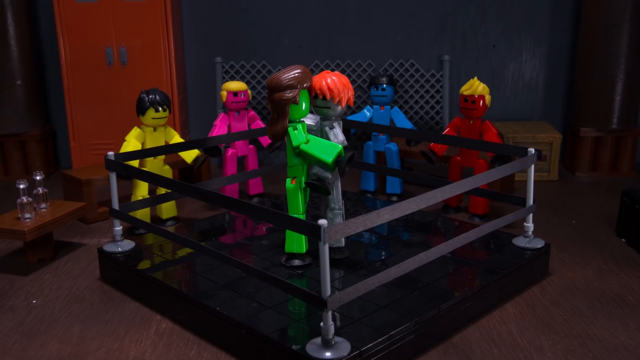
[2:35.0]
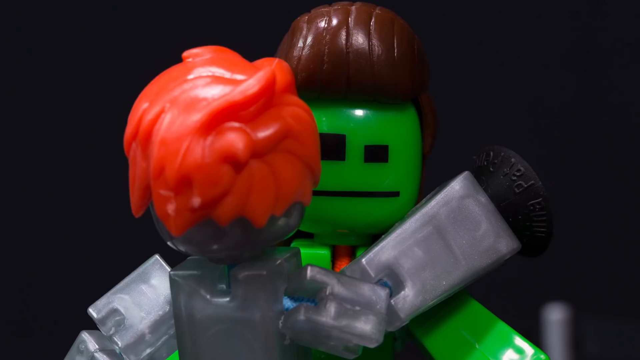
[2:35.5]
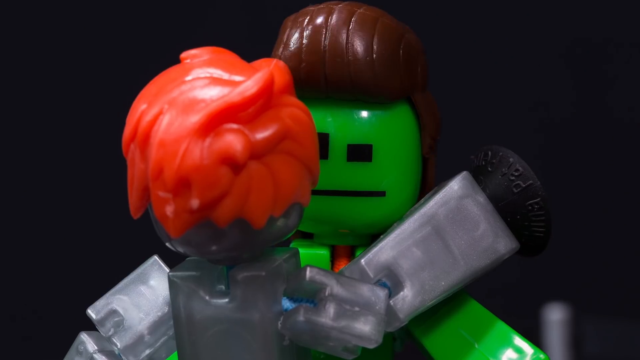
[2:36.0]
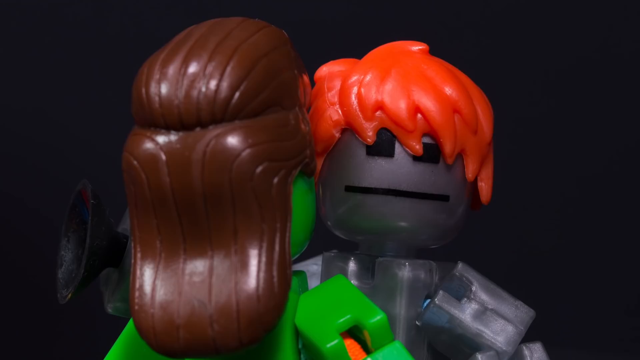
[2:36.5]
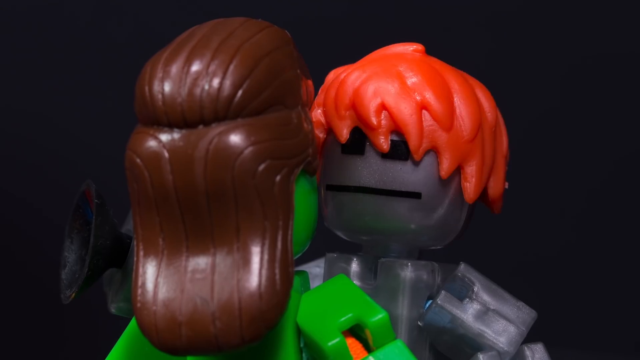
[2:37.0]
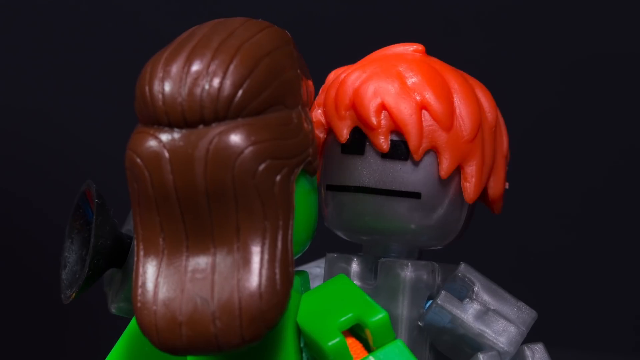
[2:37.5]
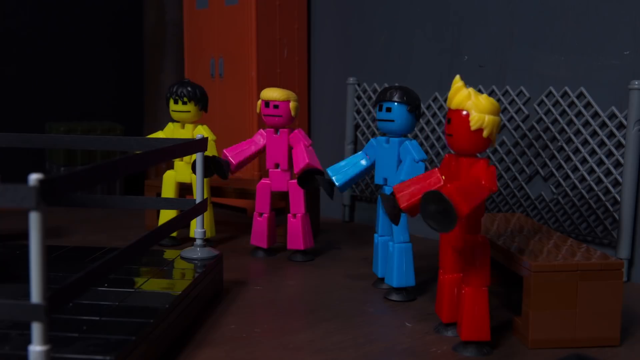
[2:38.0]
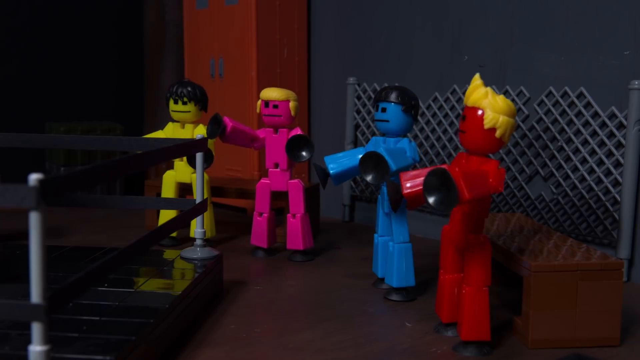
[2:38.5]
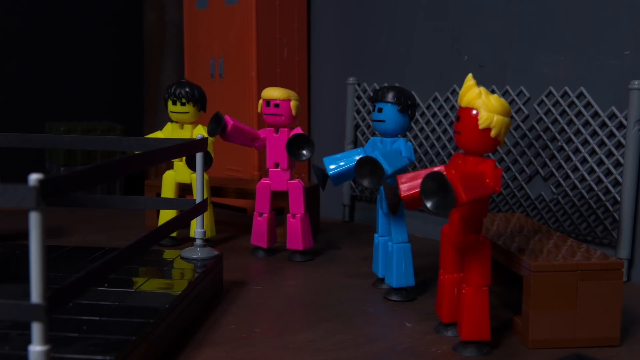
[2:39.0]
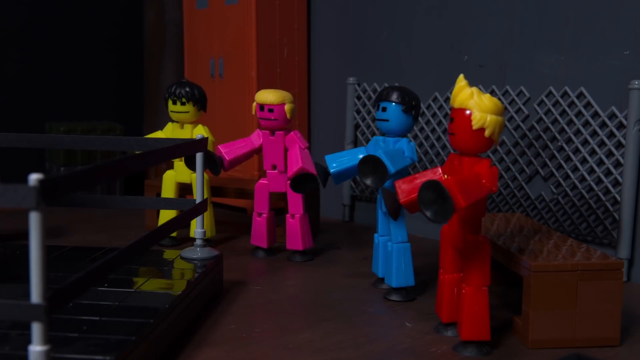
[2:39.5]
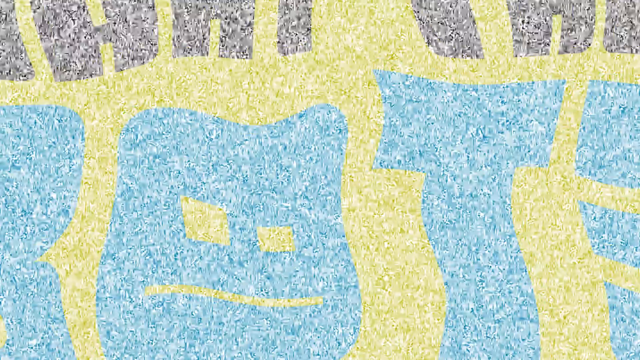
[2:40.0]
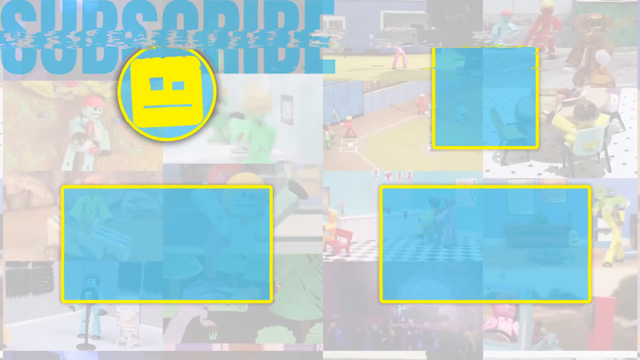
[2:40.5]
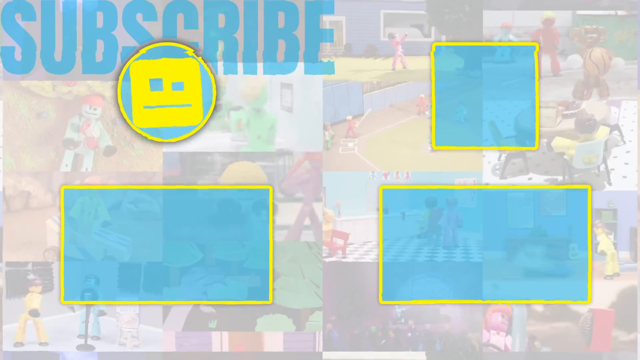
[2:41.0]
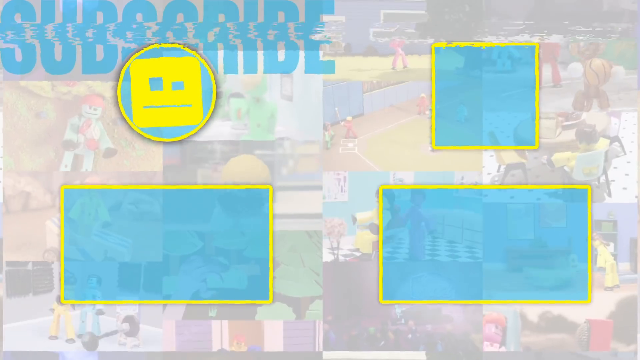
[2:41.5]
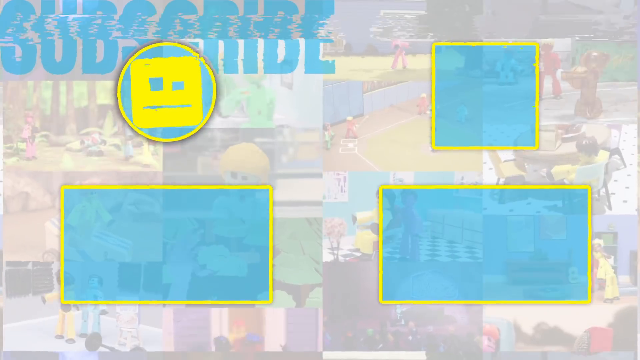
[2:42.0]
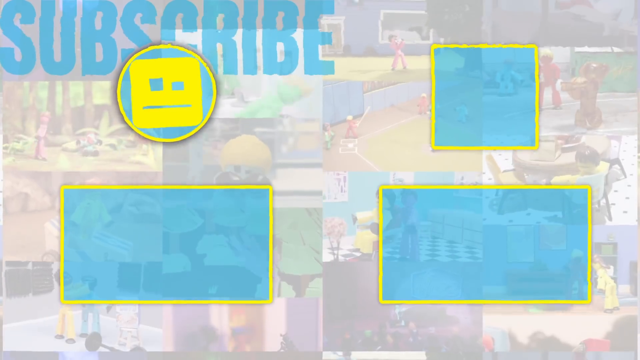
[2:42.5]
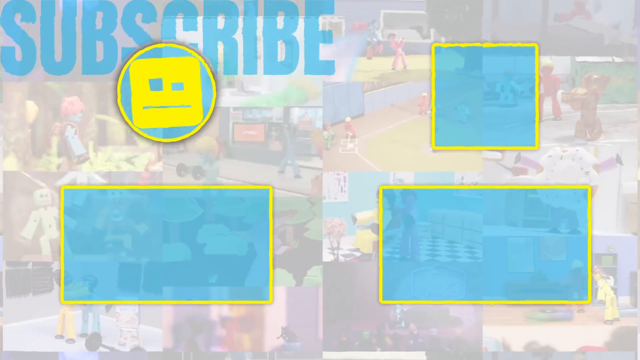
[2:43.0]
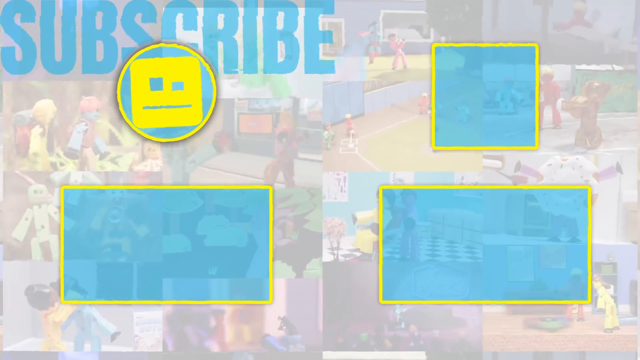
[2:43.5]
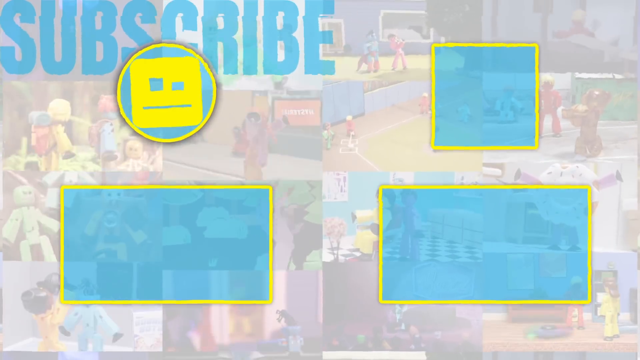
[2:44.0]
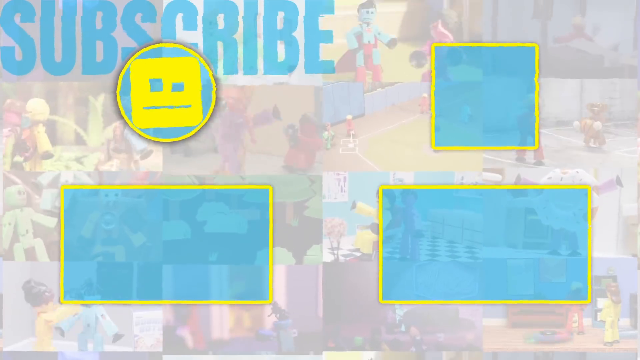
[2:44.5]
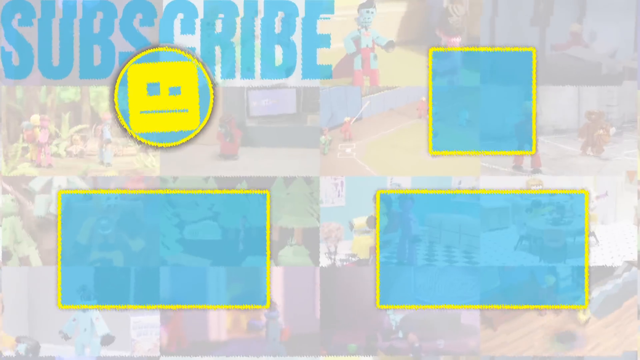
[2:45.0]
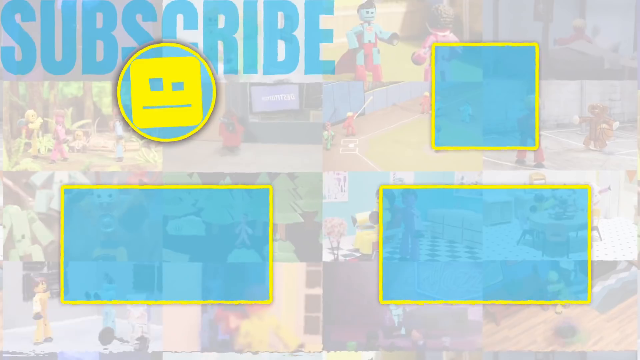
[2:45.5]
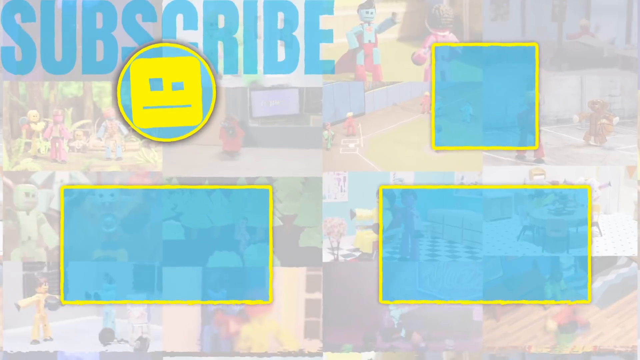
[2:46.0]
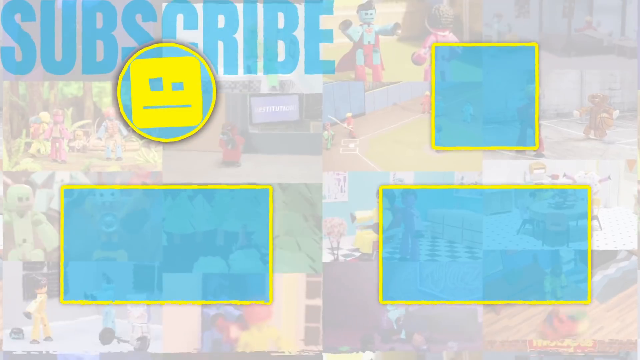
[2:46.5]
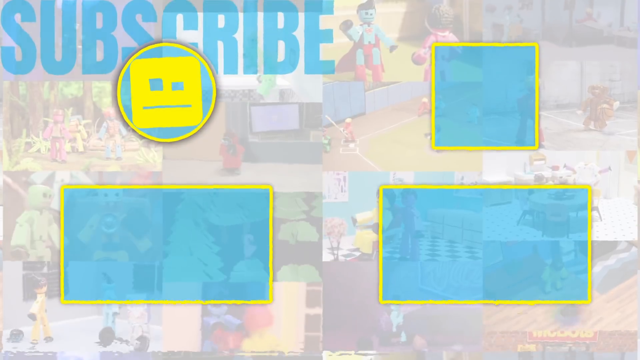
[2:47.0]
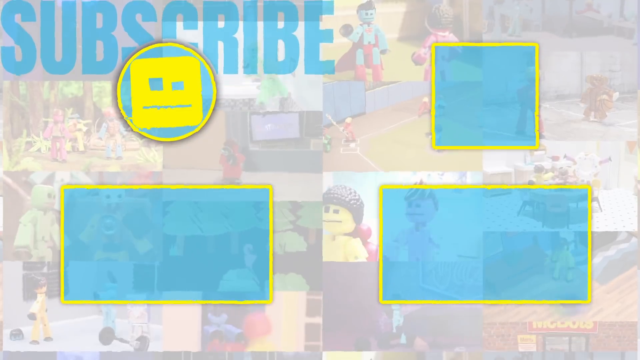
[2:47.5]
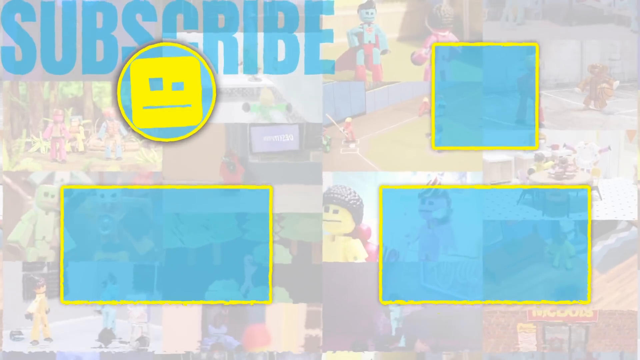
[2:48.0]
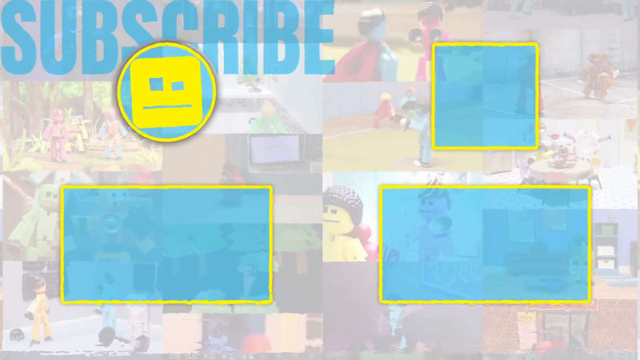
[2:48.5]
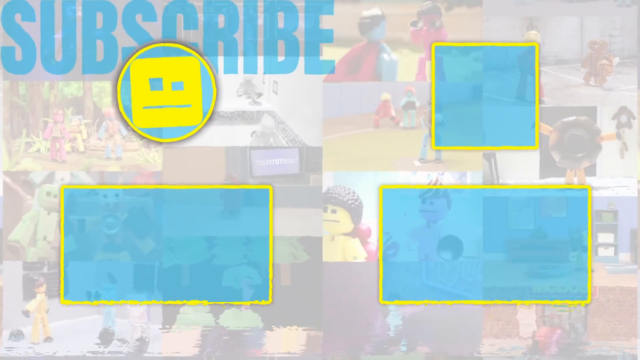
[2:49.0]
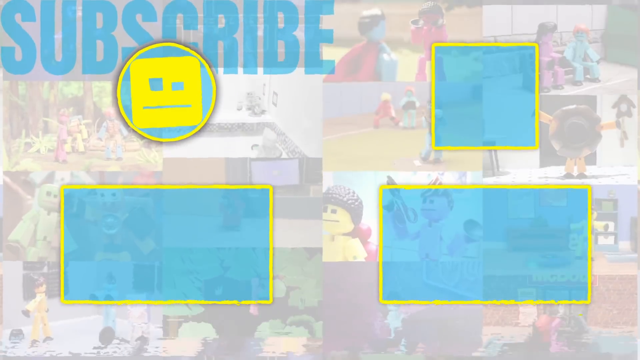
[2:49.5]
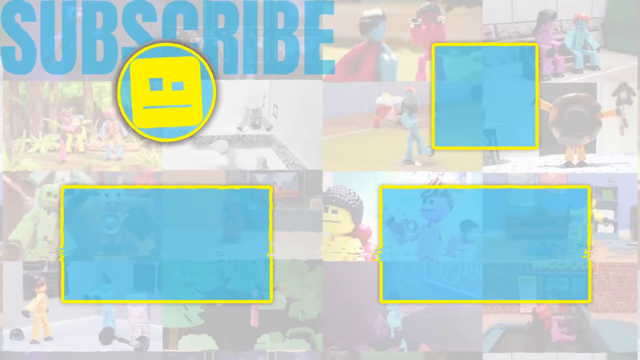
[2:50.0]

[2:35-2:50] In a boxing gym, an all-black boxing ring is in the middle, with four people outside it watching. Two humanoid figurines are in it: the one on the left is green with brown hair, and the one on the right is silver-gray with orange hair. They are standing very close to each other. The camera zooms in on their faces, which are touching on the cheek. The two figures seem to be talking as their heads turn towards each other. The scene focuses on the watching figurines, who start gesturing around and moving their limbs. At the end, there is a faded white screen with different videos playing in the background, and in the top left corner it says "subscribe" in blue lettering.